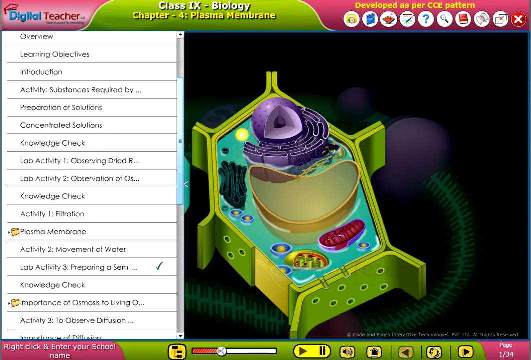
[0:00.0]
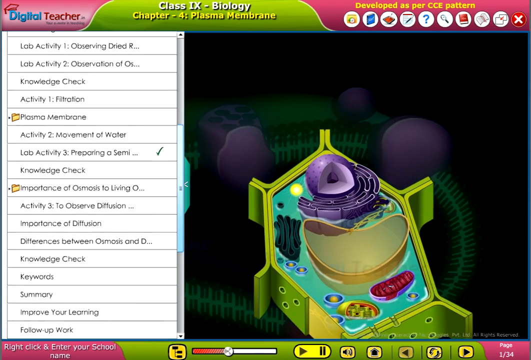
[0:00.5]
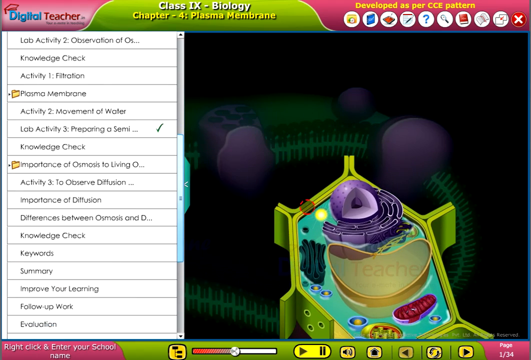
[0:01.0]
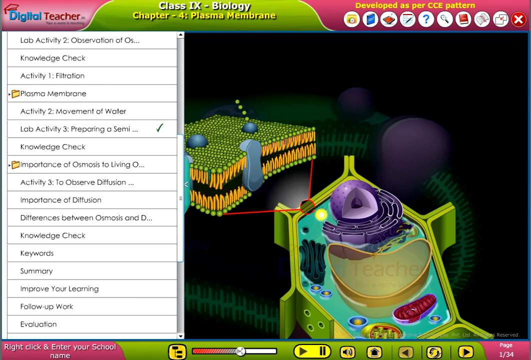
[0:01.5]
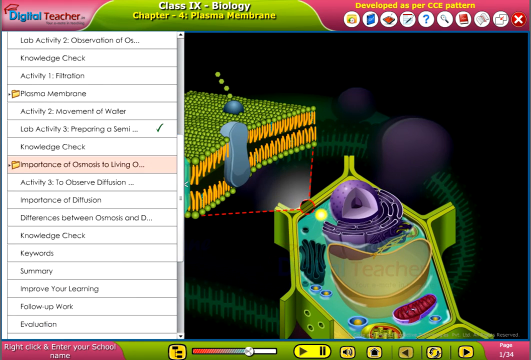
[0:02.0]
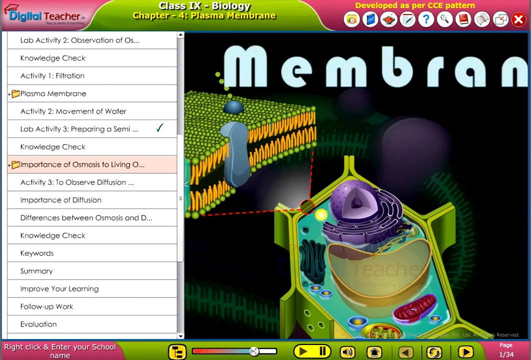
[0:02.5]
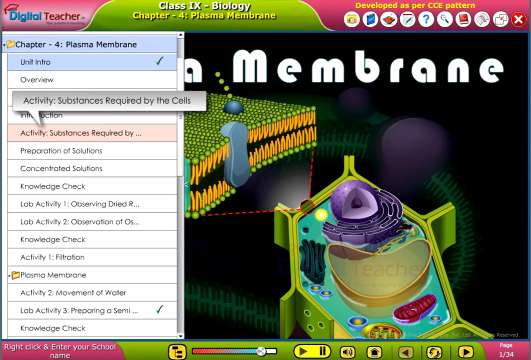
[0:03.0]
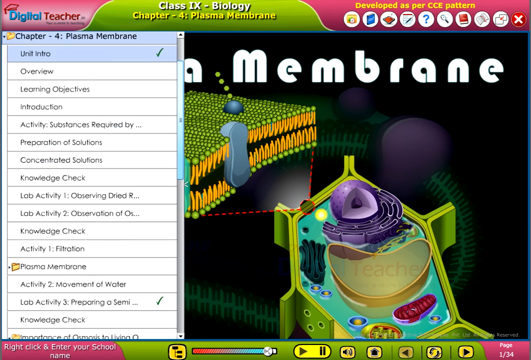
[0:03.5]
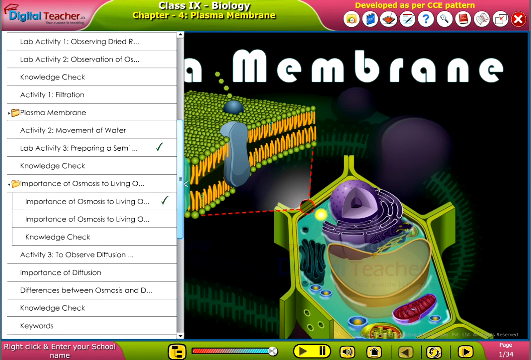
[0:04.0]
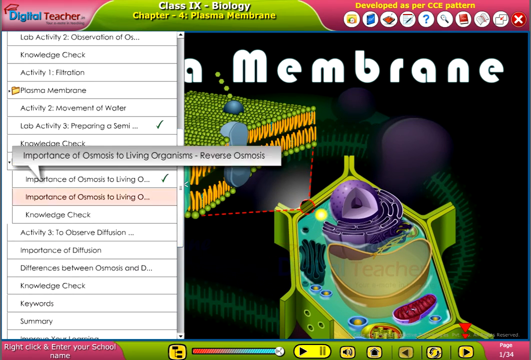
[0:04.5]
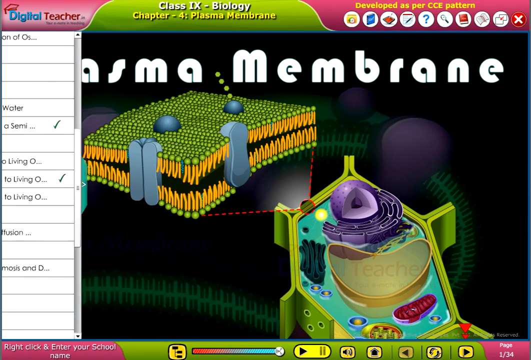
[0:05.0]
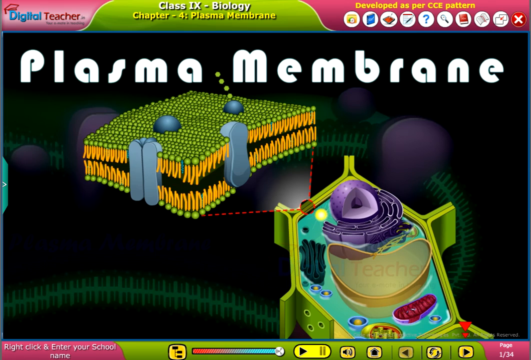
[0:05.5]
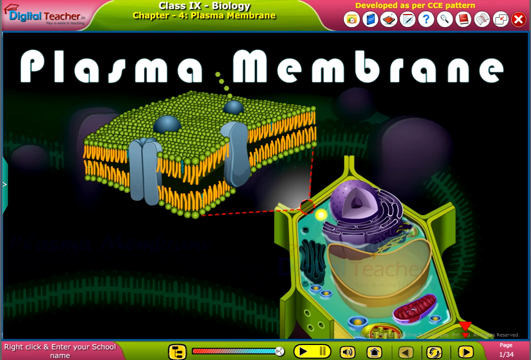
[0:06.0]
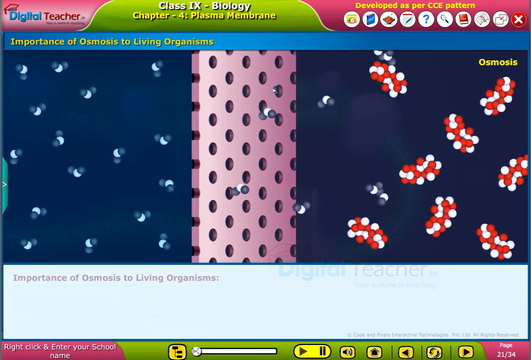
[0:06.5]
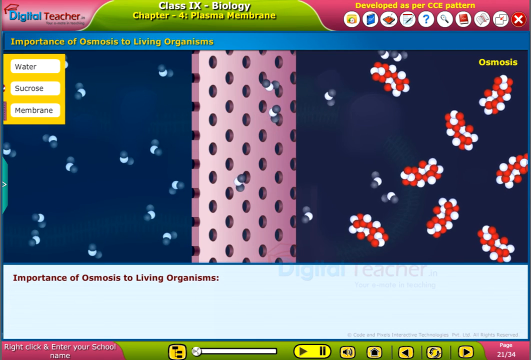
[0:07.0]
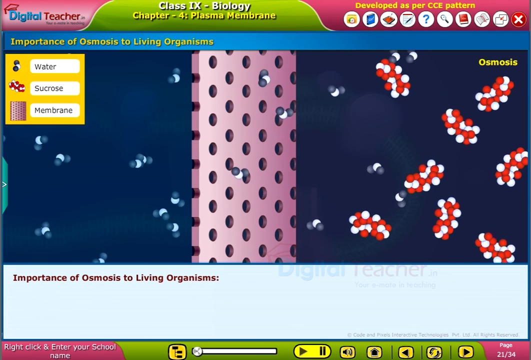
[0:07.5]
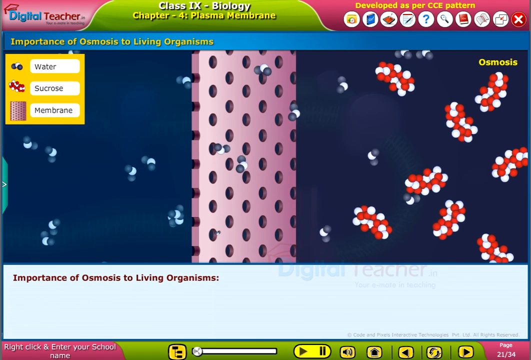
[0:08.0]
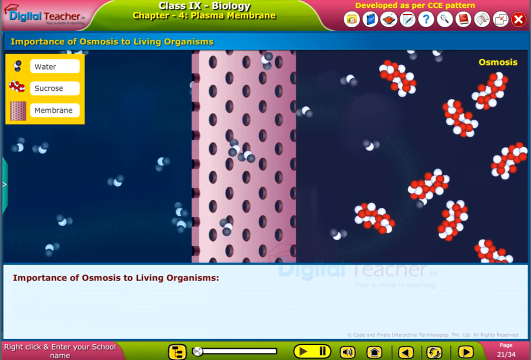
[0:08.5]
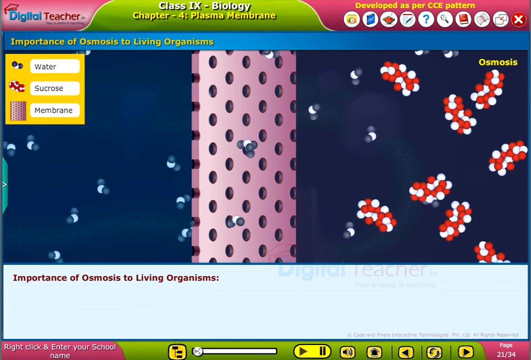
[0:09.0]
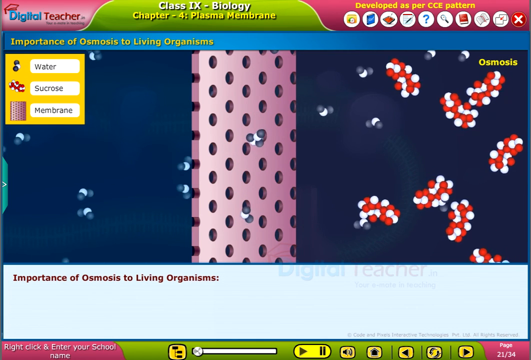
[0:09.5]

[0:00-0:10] A Digital Teacher screen for biology, Chapter 4, plasma membrane, has a pink background at the top. It is labeled "developed as per CCE pattern" and has multiple icons, including a red exit button on the right. On the left is an outline of the biology material for the class, listing overview, learning objects, introduction, activity, substance required by preparation of solutions, concentrated solutions, knowledge check, lab activity, lab activity two, knowledge check activity, filtration, plasma membrane, activity two, lab activity three, knowledge check, and importance of osmosis. In the background the membrane appears in a colorful graphic, followed by the importance of osmosis of living organisms.